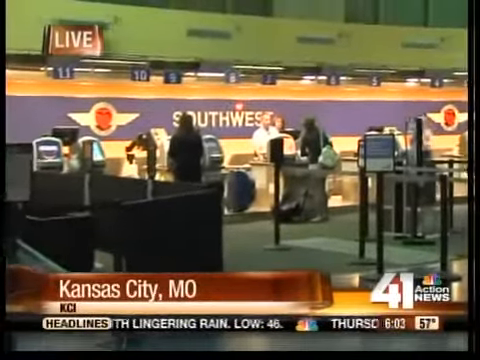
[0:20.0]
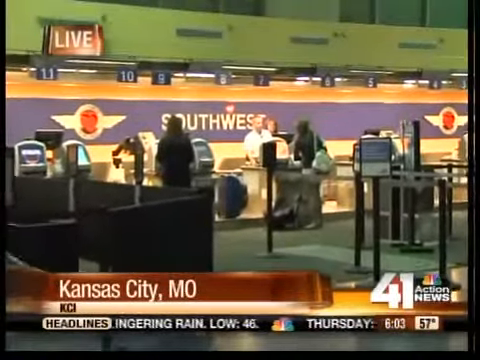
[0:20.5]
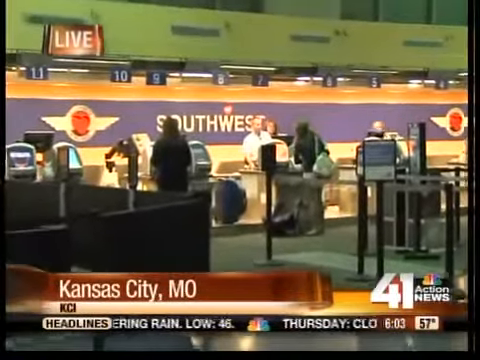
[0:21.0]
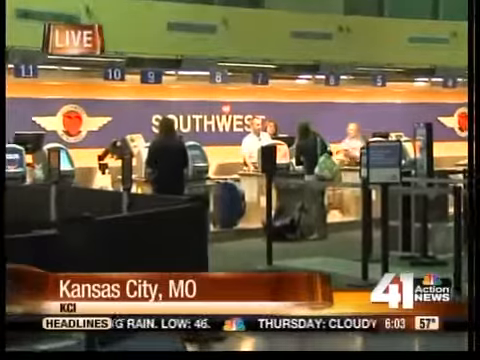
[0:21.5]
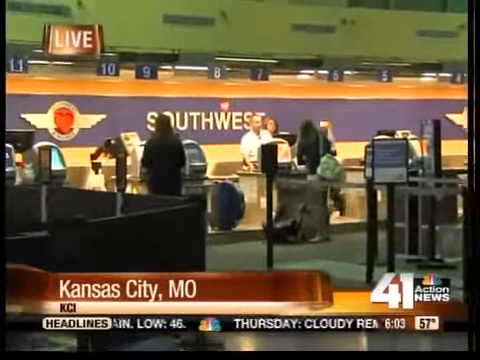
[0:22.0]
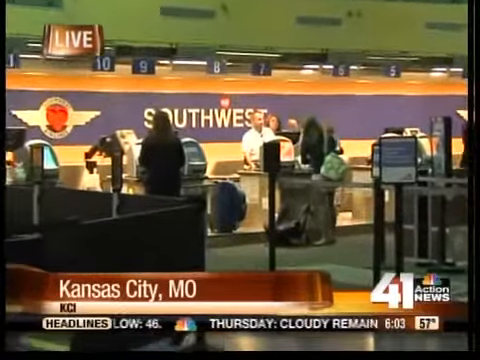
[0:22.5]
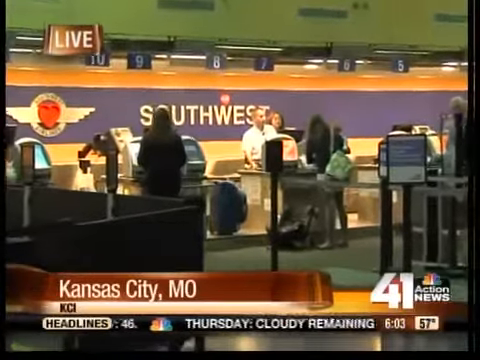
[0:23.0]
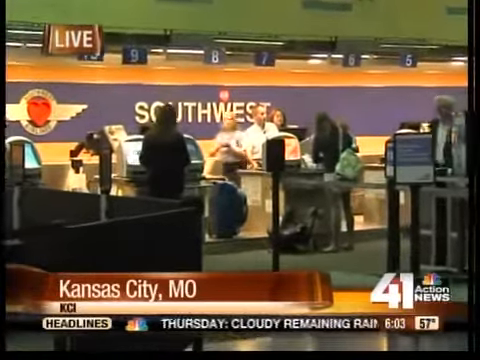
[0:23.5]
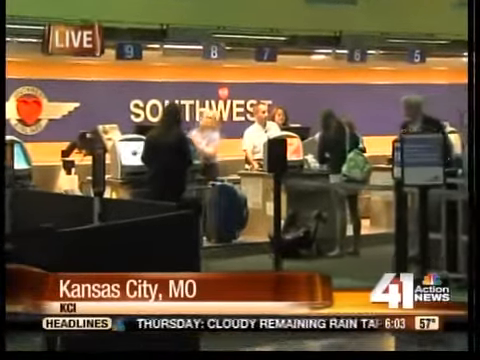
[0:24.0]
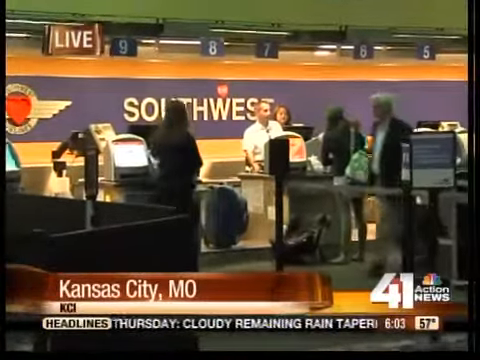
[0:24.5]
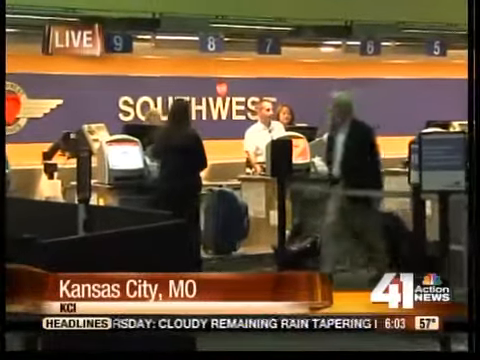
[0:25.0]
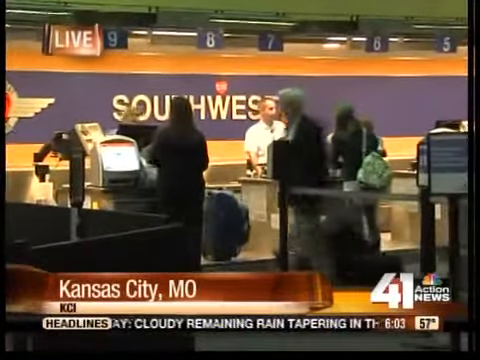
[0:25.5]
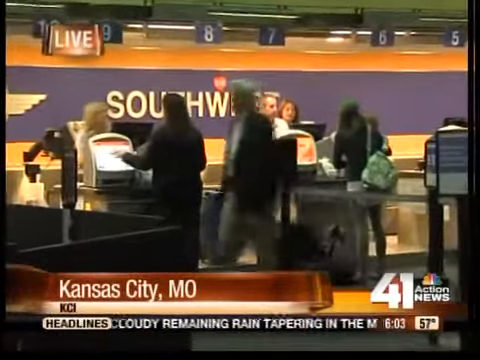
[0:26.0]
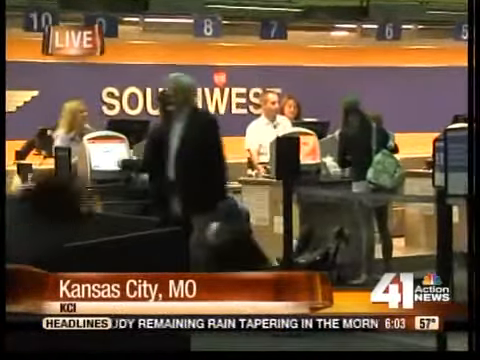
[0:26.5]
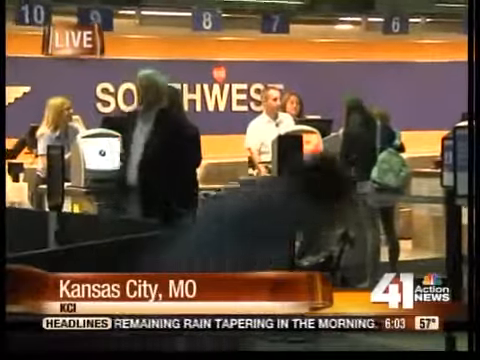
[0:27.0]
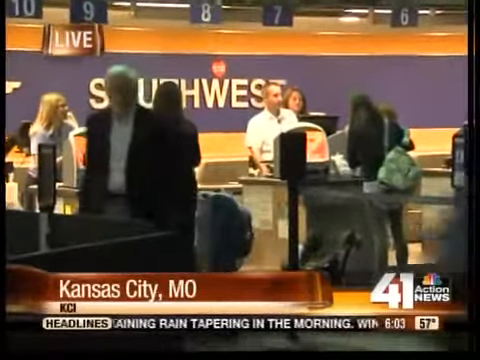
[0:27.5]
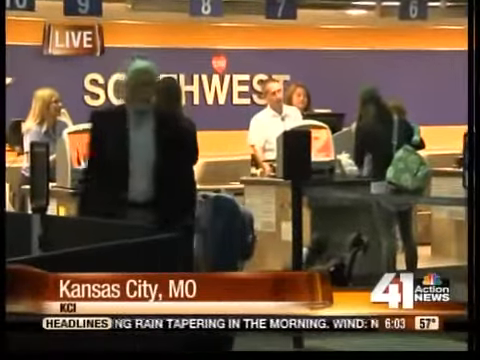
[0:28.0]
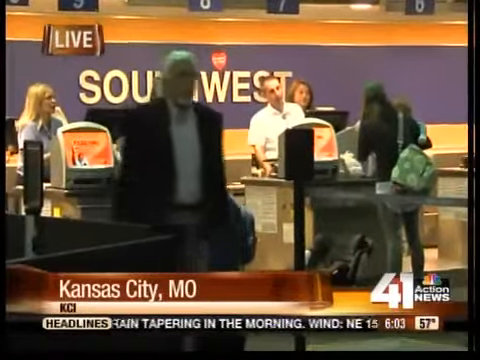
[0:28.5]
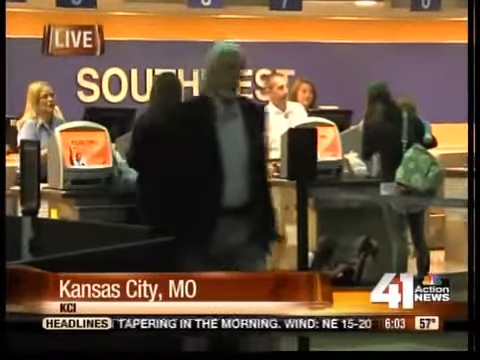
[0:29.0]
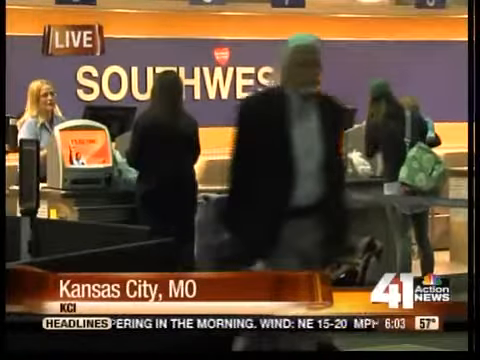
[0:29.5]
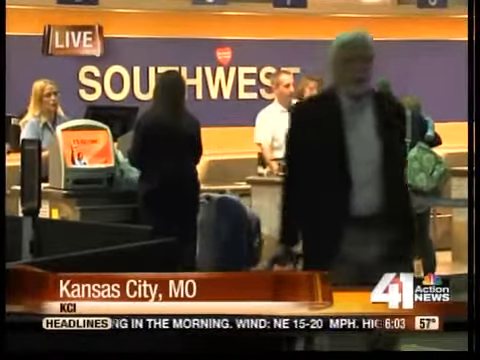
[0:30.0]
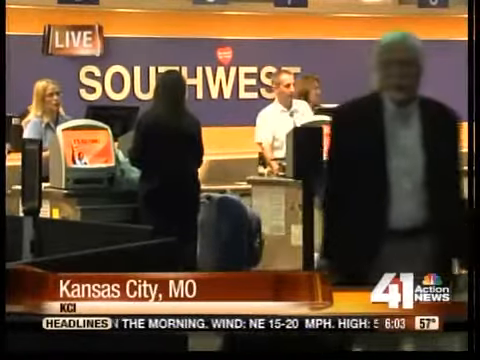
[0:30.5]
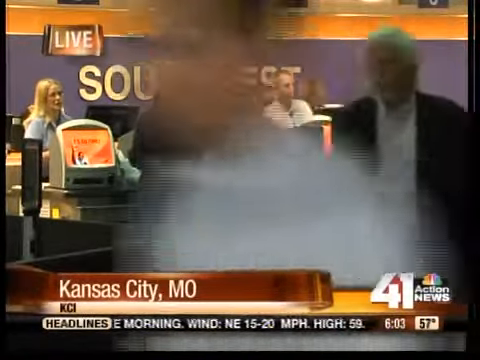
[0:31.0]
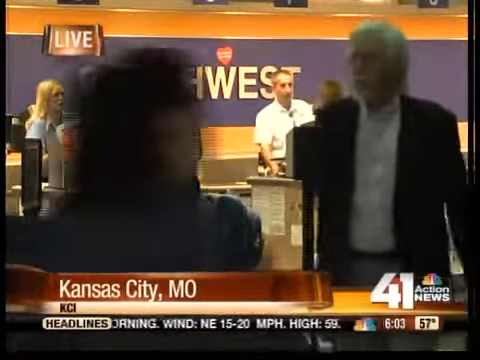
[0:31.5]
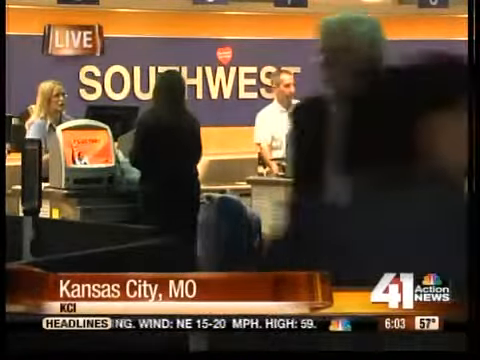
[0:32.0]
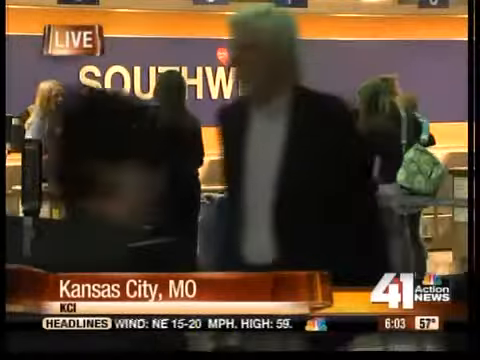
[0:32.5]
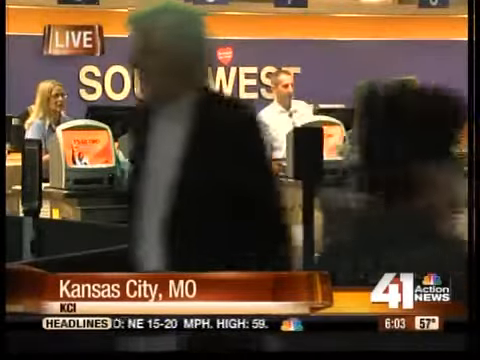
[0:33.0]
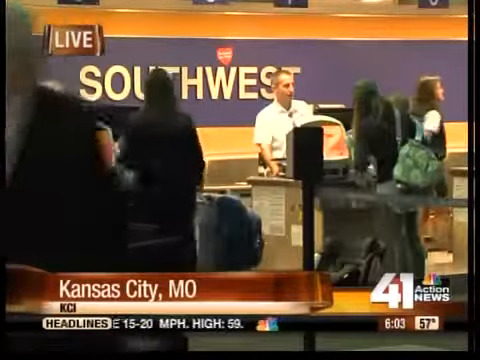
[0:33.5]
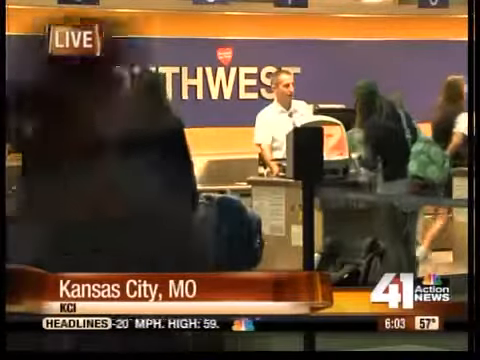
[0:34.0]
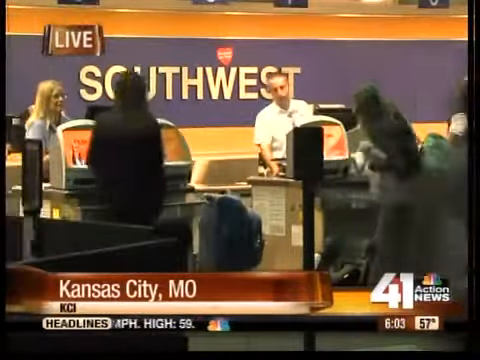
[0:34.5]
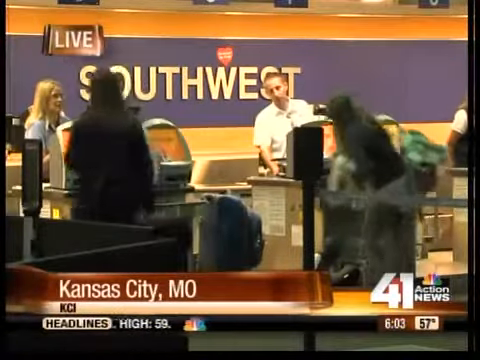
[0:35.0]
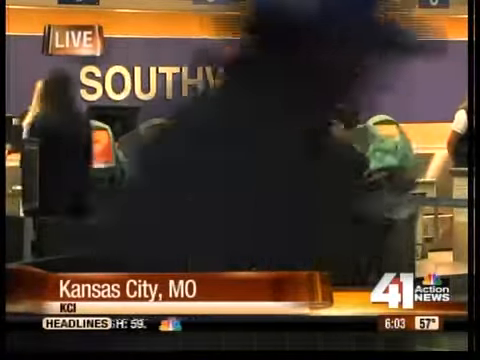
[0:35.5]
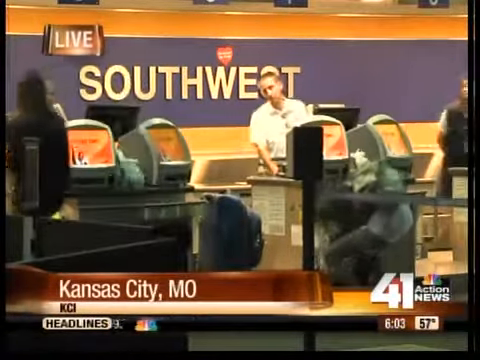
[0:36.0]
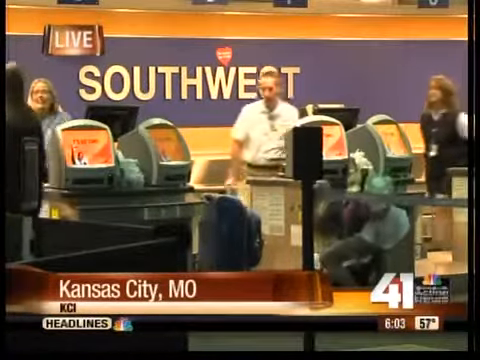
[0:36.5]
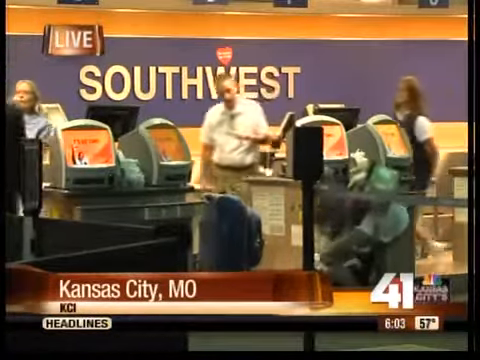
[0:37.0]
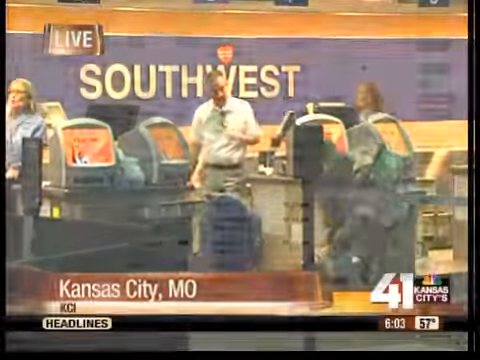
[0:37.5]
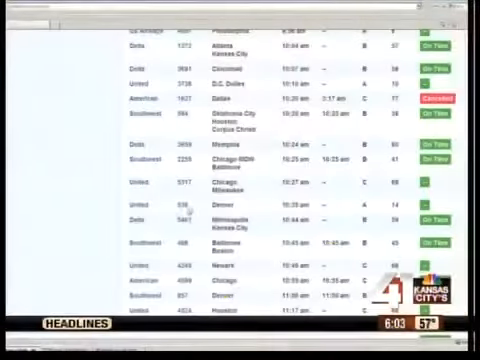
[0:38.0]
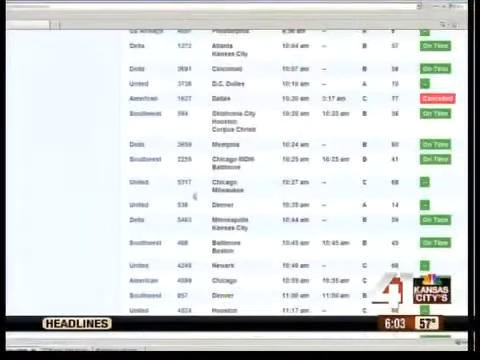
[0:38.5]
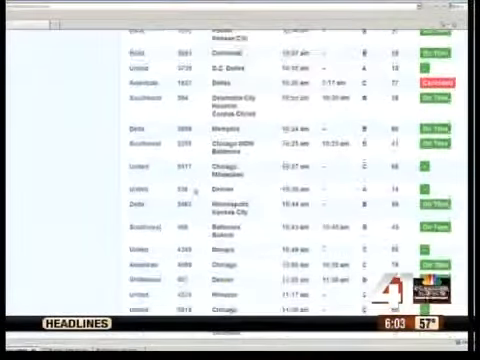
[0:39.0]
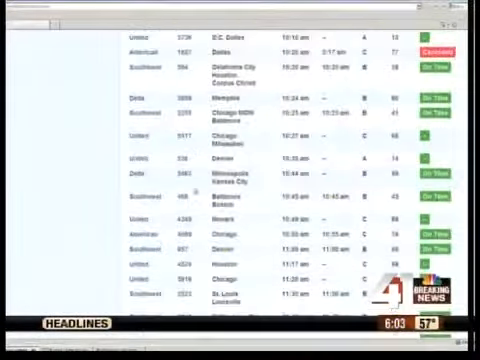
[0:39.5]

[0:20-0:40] A live shot from Kansas City, MO KCI shows a number of people in what looks like an airport. Numbers 11, 10, 9, 8, 7, 6, 5, 4 are visible, and "Southwest" is written in light yellow on a purple strap. Many people walk around with suitcases, and some carry bags on their shoulders. Along the bottom, headlines in black text on a white rectangle sit next to the multicoloured symbol of the news channel, reading "Thursday, cloudy remaining rain tapering in the morning. Wind NE 15-20 mph and high is 59." Different slides continue to appear, with the flights that are on time written in green.